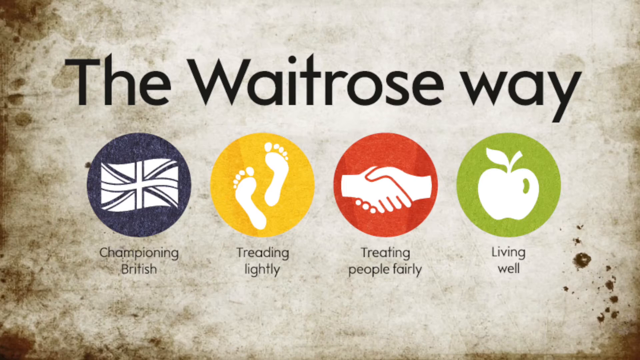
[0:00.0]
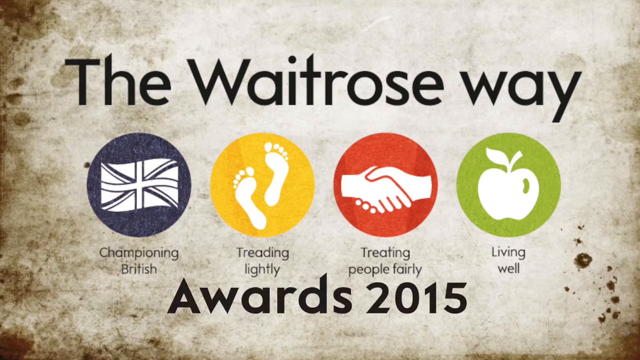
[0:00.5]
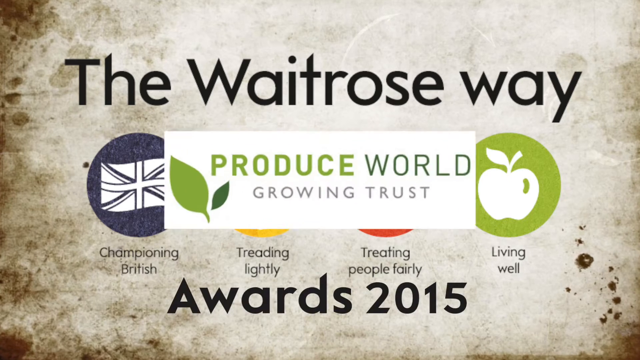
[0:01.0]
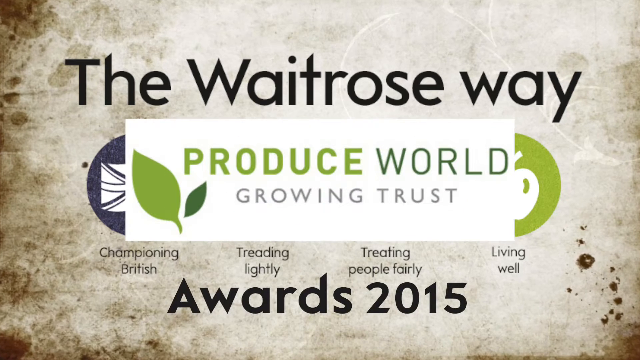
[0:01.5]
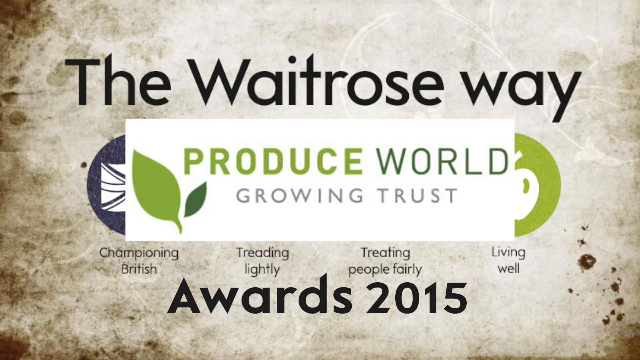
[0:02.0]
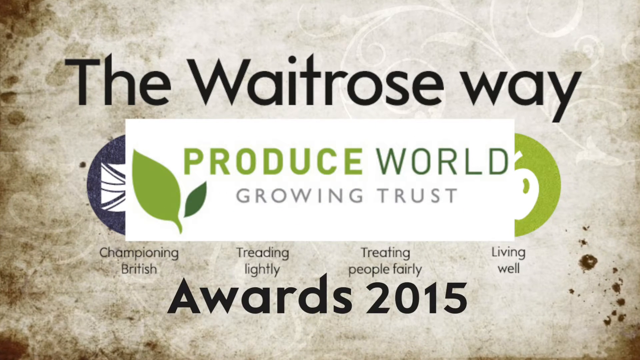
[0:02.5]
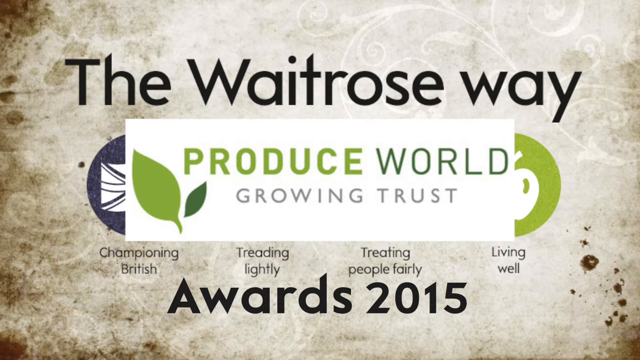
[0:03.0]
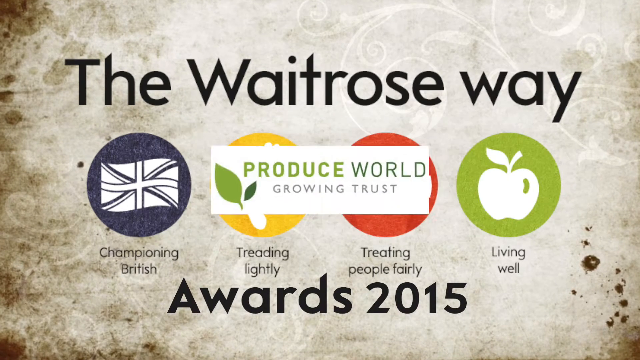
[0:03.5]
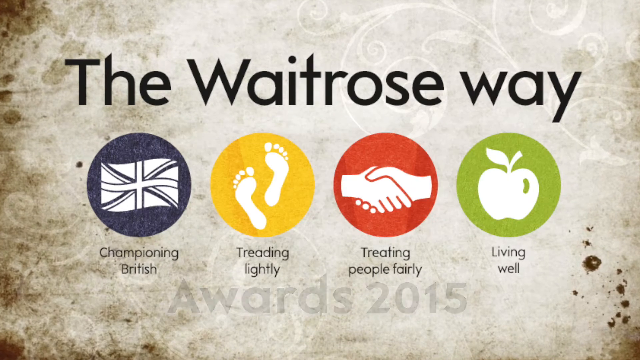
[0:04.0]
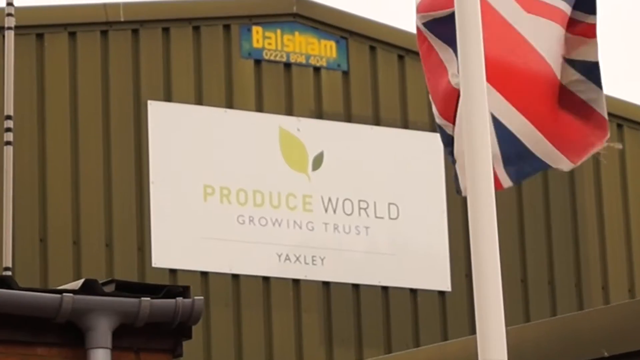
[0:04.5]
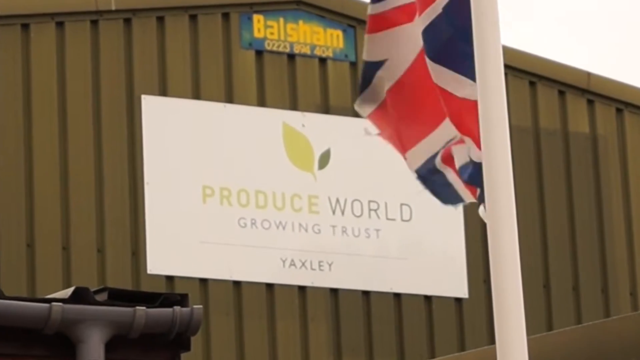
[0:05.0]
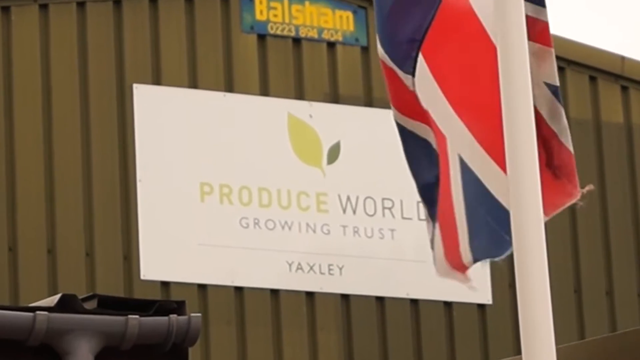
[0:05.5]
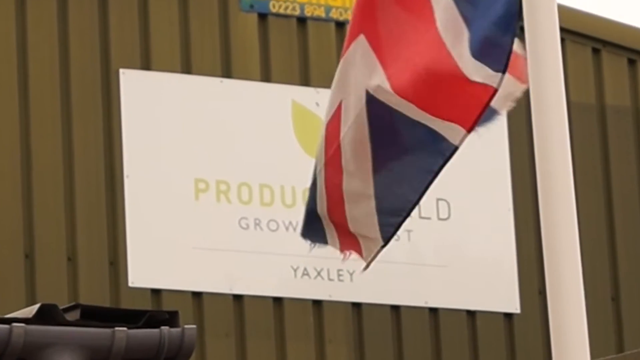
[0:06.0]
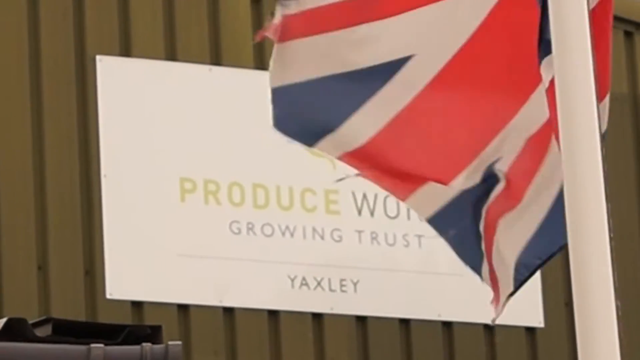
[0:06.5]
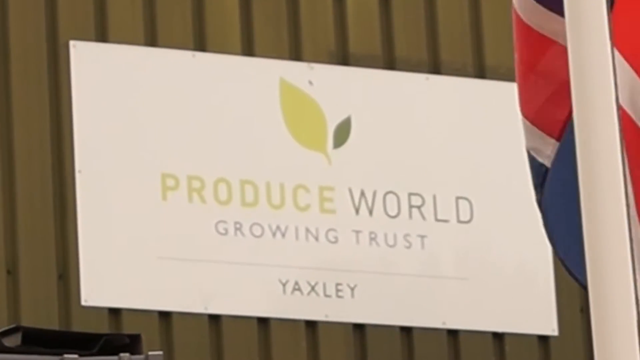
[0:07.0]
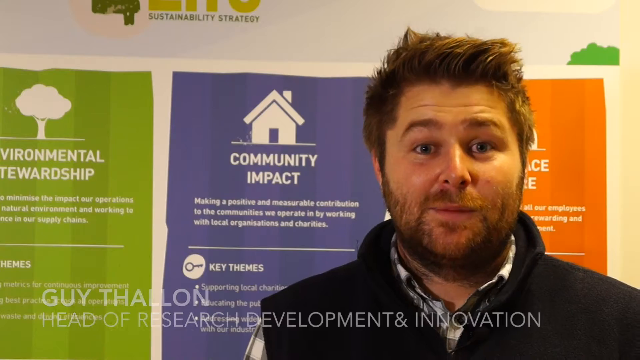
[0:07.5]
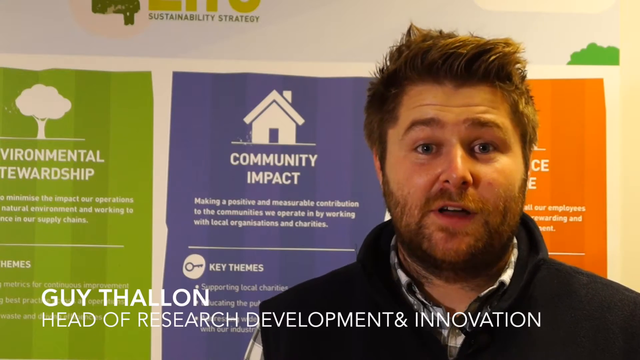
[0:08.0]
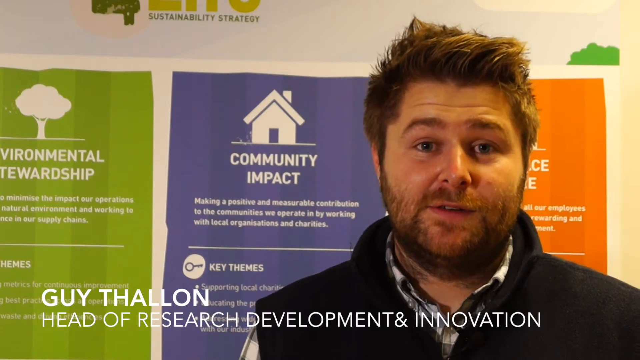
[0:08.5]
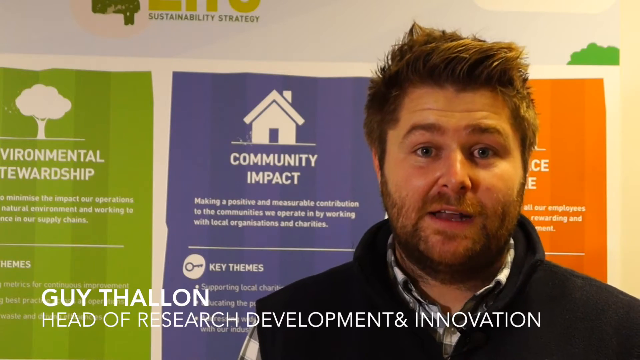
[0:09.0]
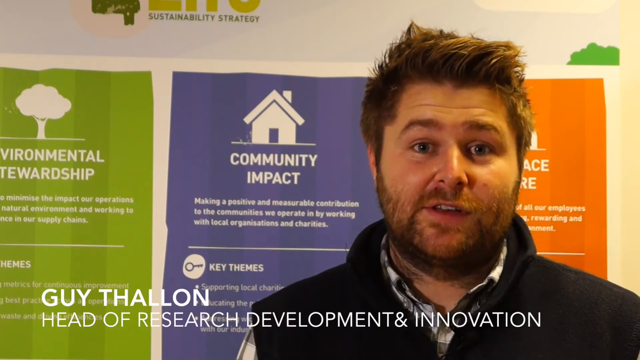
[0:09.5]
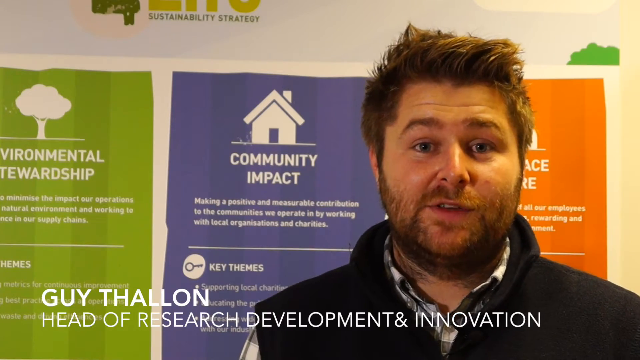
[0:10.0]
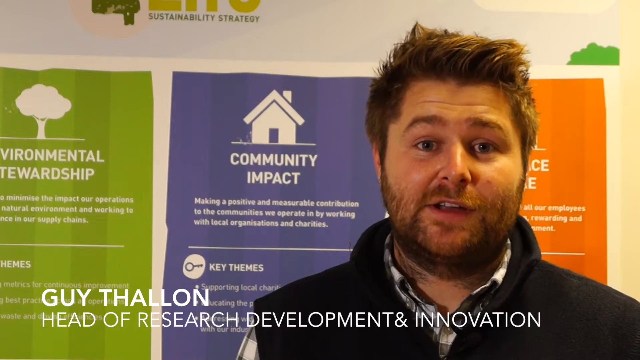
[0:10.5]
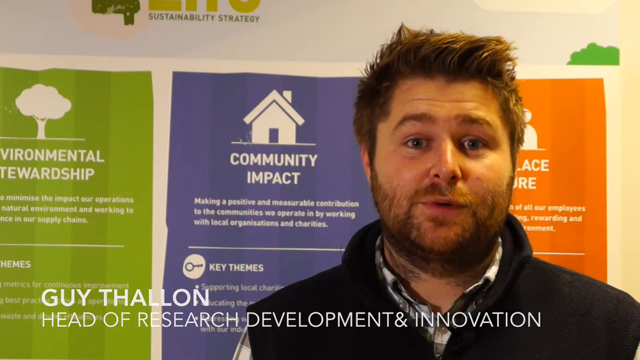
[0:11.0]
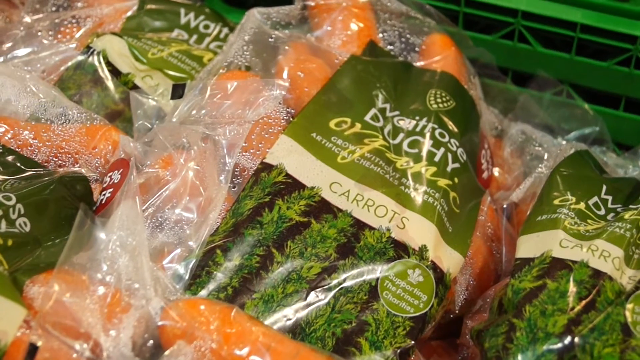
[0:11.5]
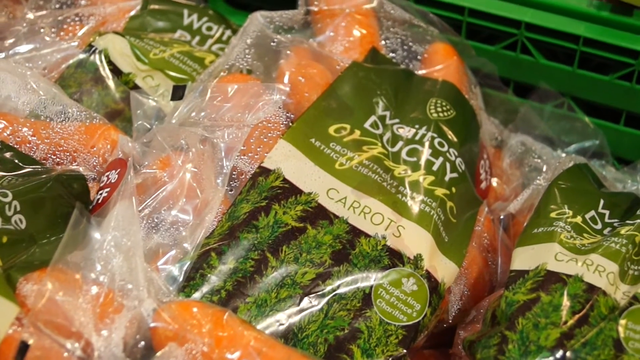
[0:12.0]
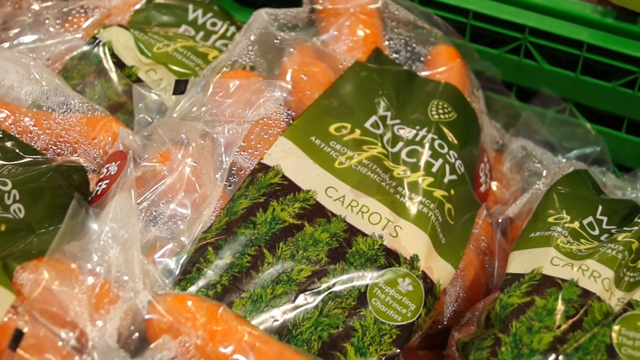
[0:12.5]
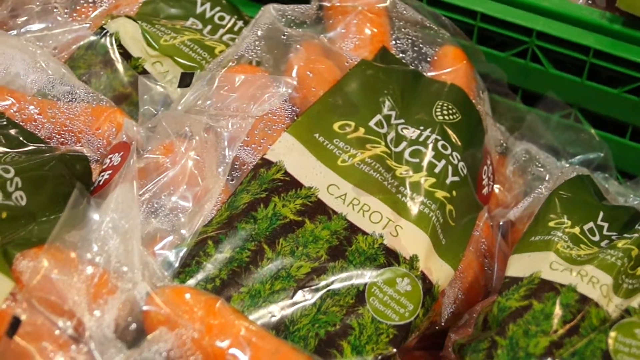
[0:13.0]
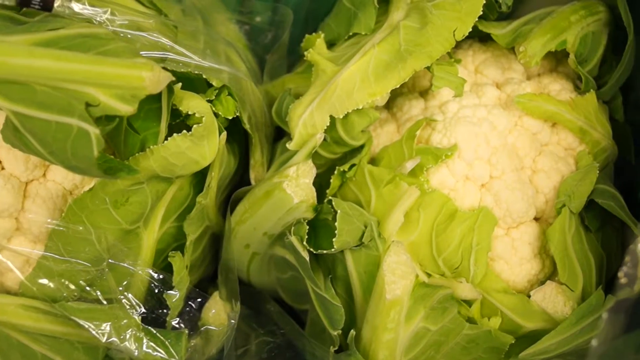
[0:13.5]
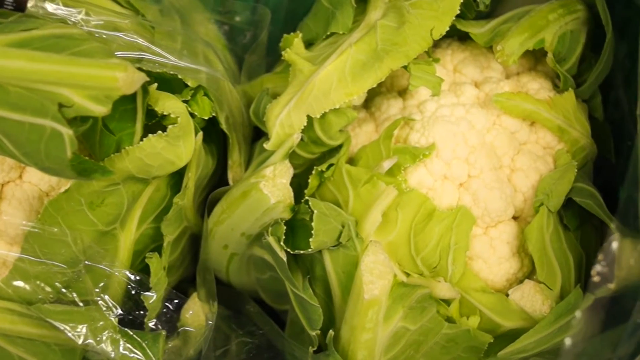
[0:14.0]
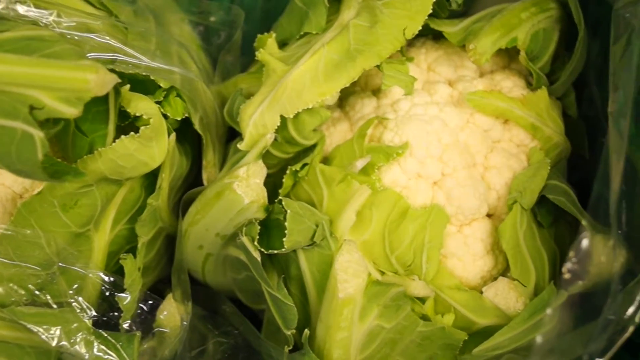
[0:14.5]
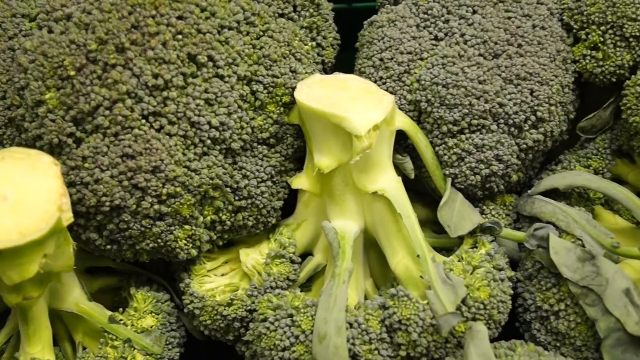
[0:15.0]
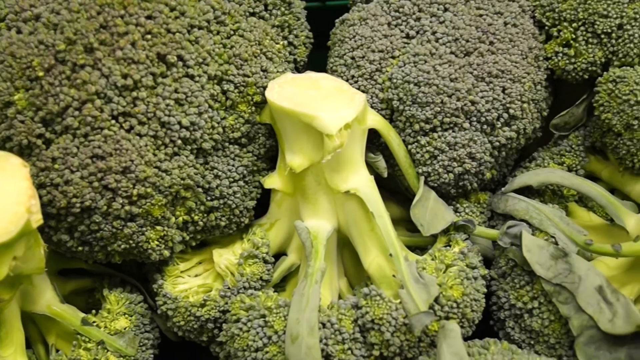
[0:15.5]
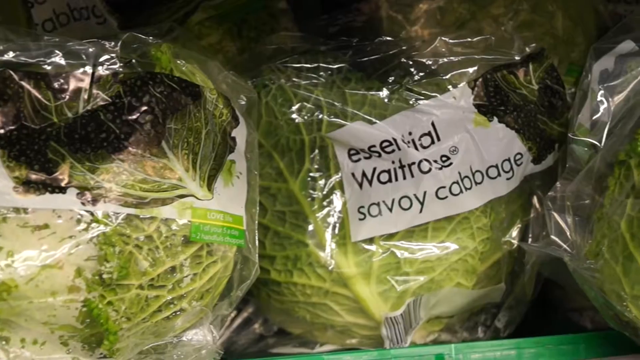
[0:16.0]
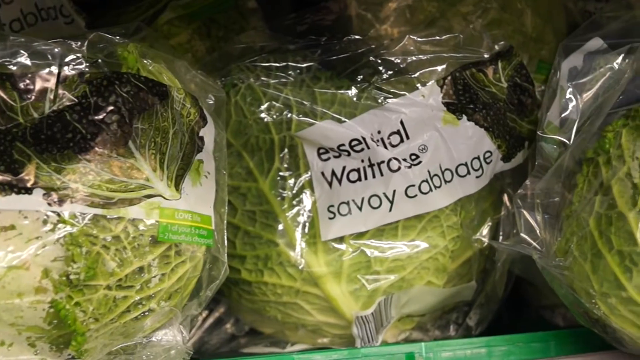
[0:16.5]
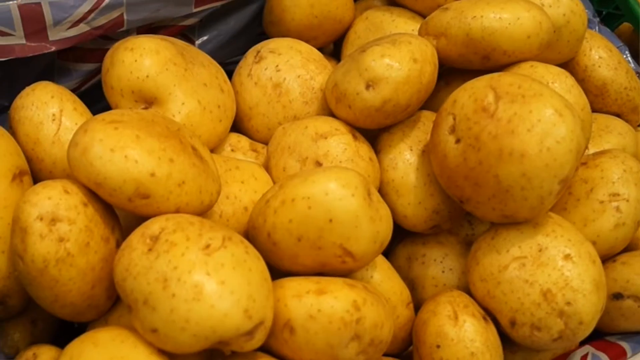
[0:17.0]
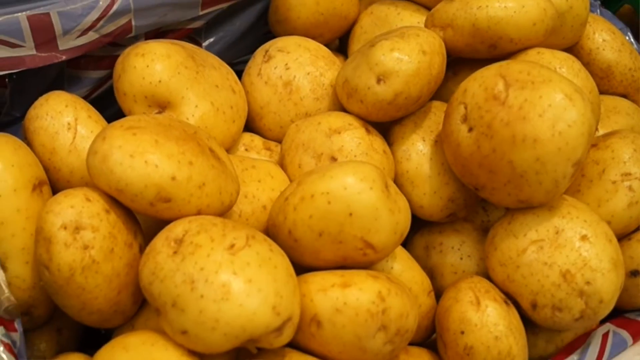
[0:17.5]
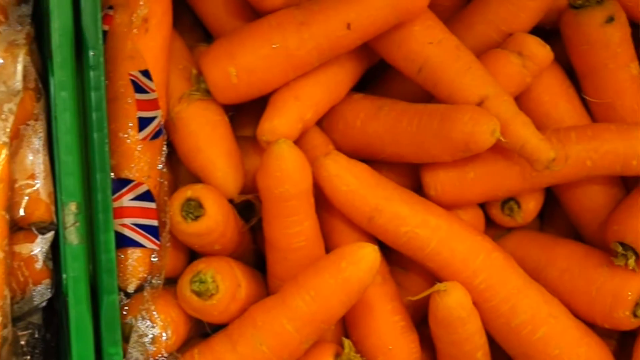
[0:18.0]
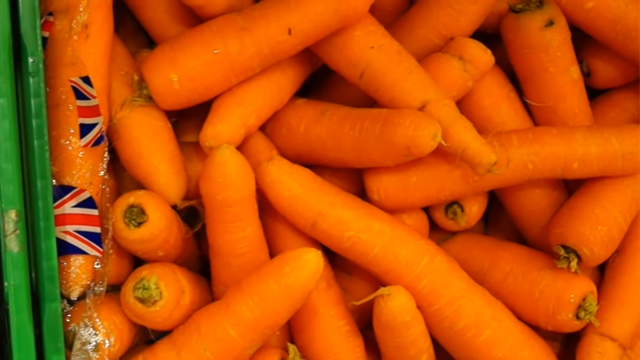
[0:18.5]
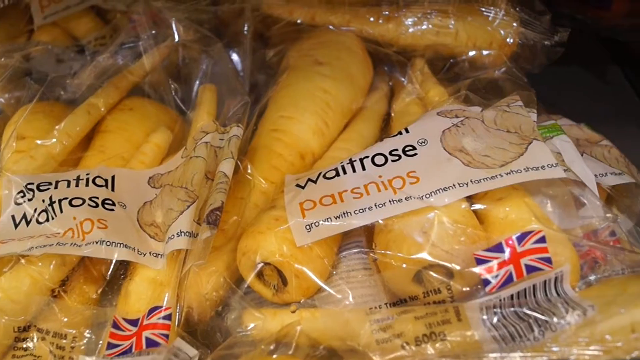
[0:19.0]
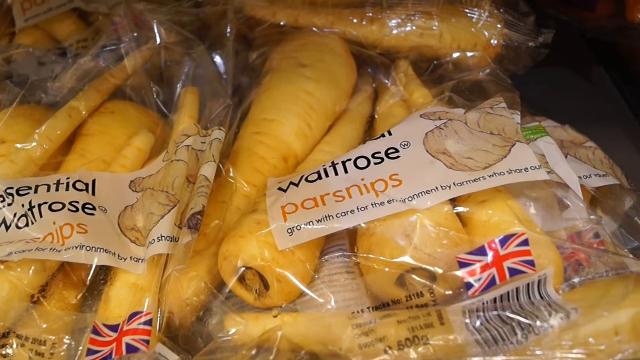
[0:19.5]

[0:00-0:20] A heading reads "The Waitrose way." A British flag appears with the text "championing British." A yellow circle with footprints is labeled "treading lightly," a red circle with hands greeting each other is labeled "treating people fairly," and a green circle with an apple reads "living well." At the bottom appears "awards 2015," and then a white rectangle with the words "produce world growing trust" pops up. The view pans to the Produce World Growing Trust Yaxley building, and a British flag flaps in the wind. The camera then pans to a man named Guy Thallon, head of the research department and innovation. Behind him is a board with "environmental stewardship" and "community impact," and he speaks to the camera. Produce follows: carrots, cauliflower, broccoli, savory cabbage, potatoes, carrots again, and parsnips.